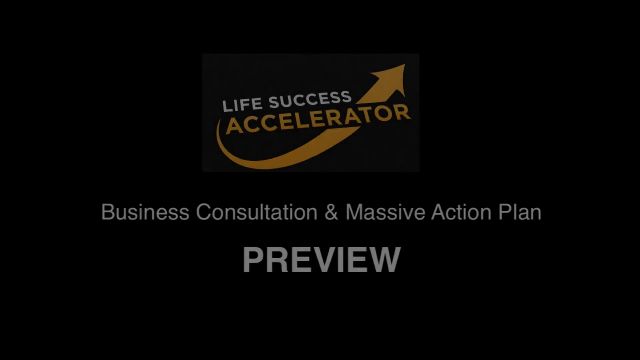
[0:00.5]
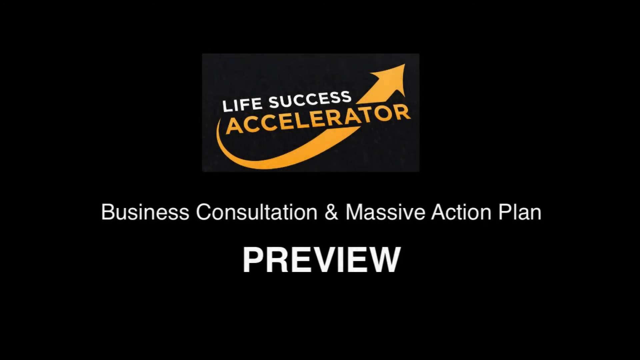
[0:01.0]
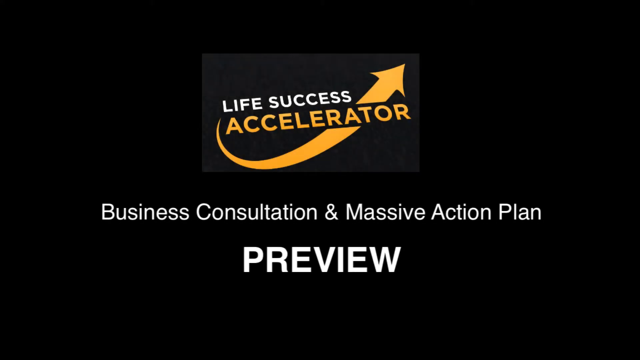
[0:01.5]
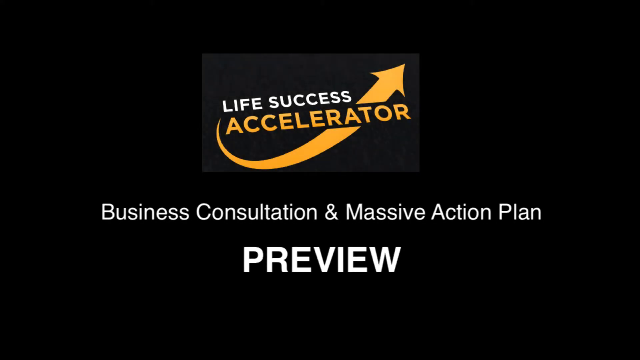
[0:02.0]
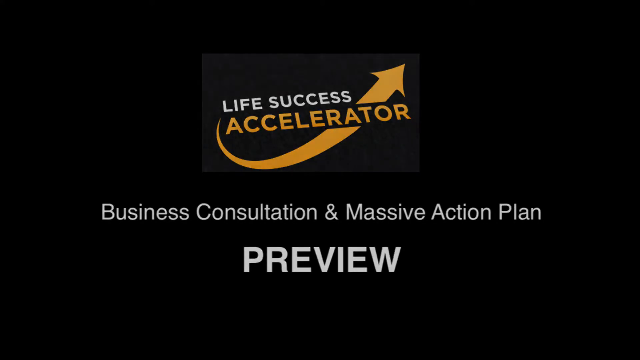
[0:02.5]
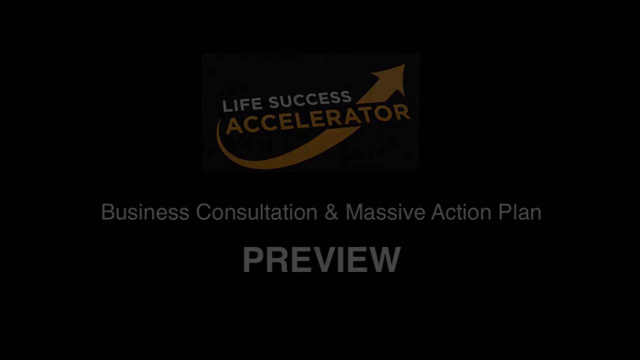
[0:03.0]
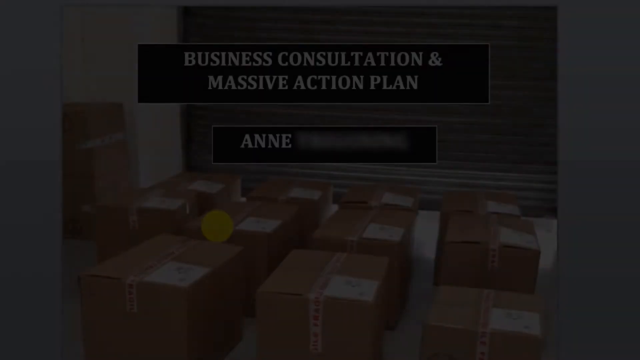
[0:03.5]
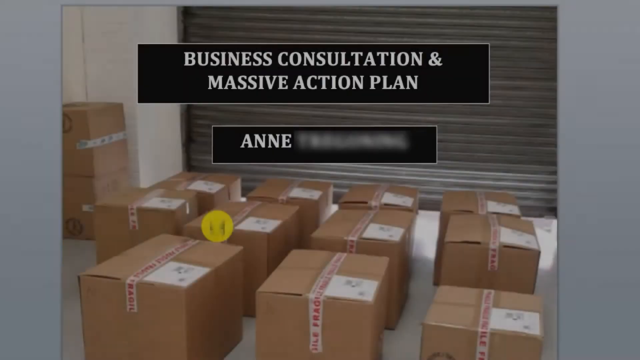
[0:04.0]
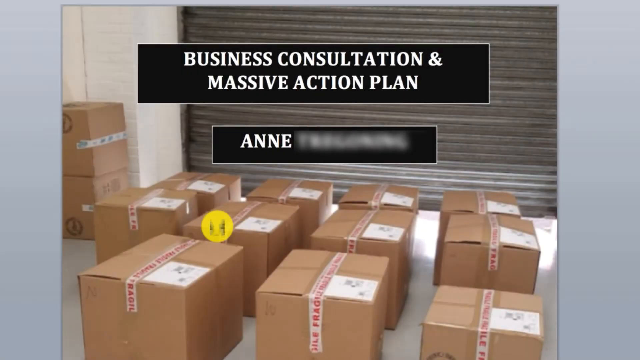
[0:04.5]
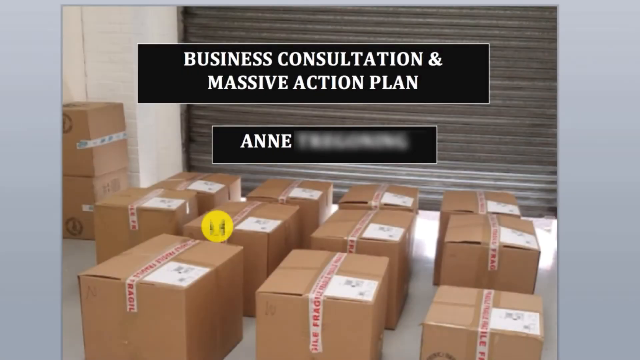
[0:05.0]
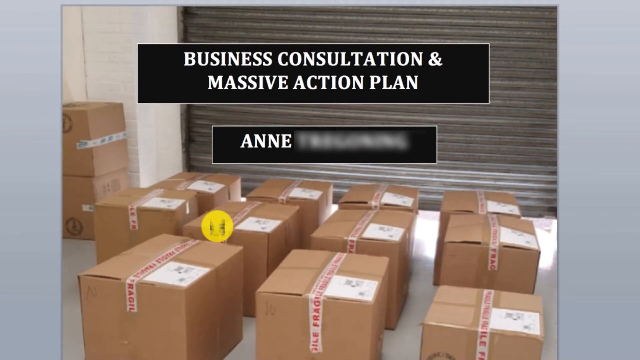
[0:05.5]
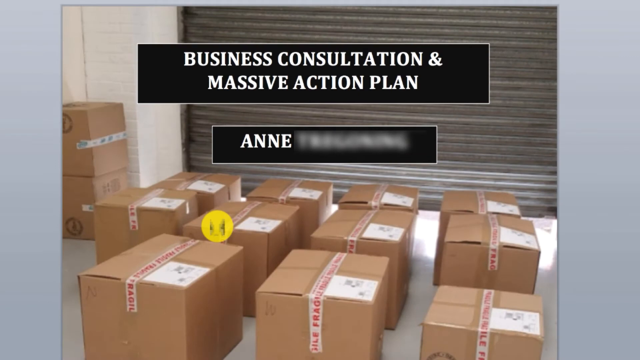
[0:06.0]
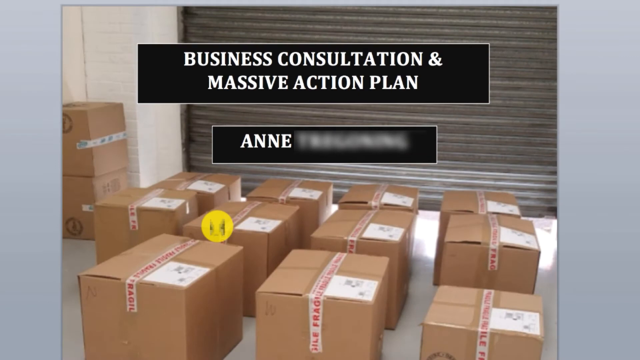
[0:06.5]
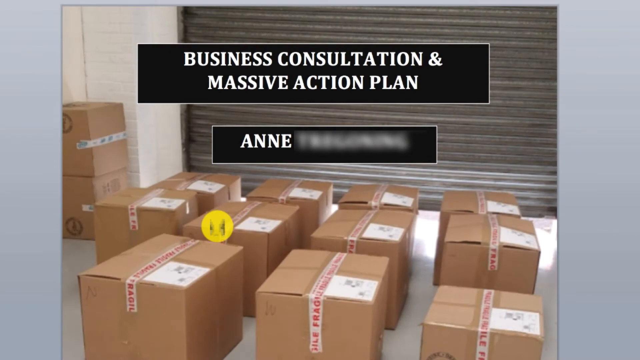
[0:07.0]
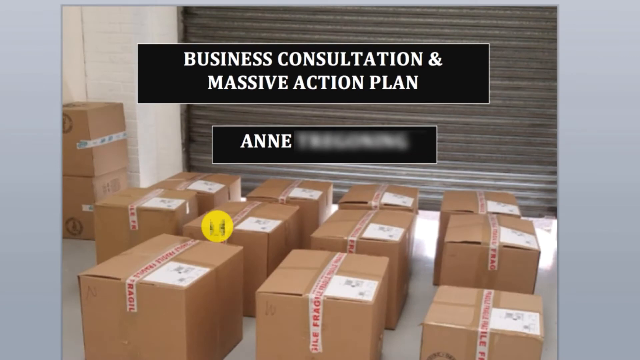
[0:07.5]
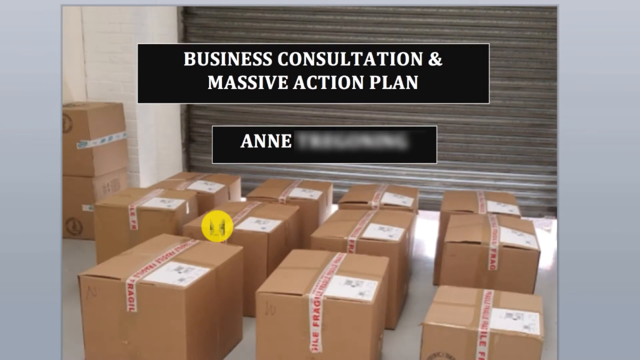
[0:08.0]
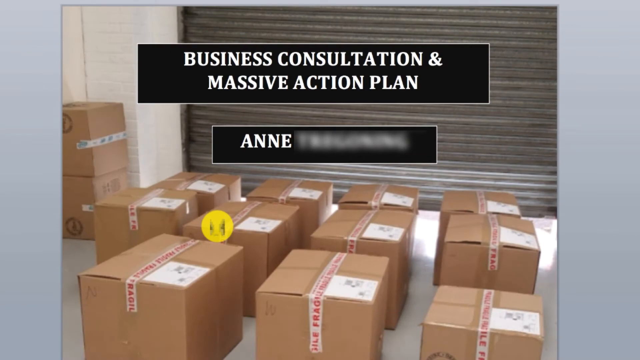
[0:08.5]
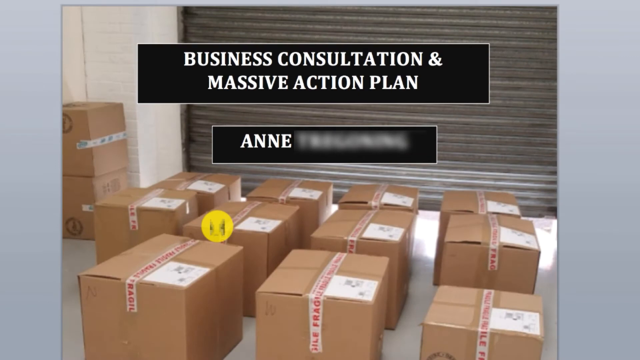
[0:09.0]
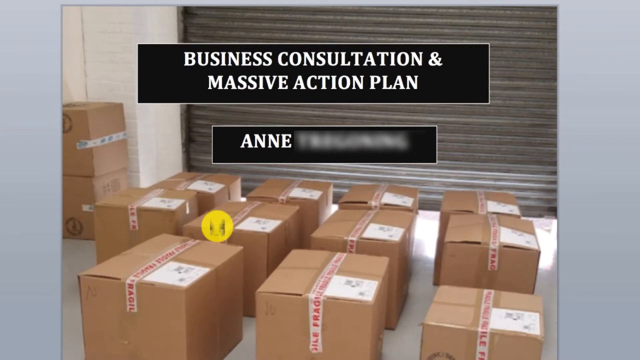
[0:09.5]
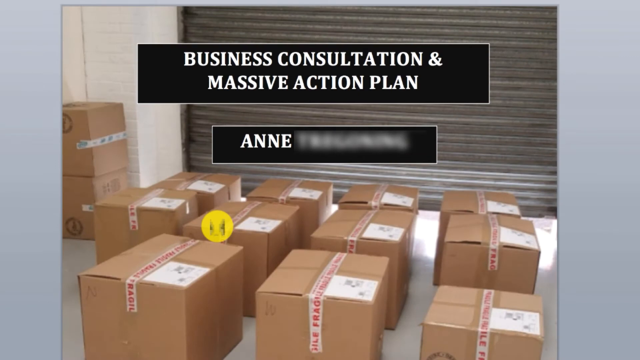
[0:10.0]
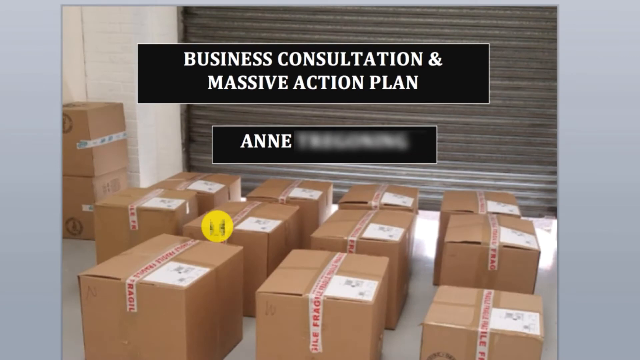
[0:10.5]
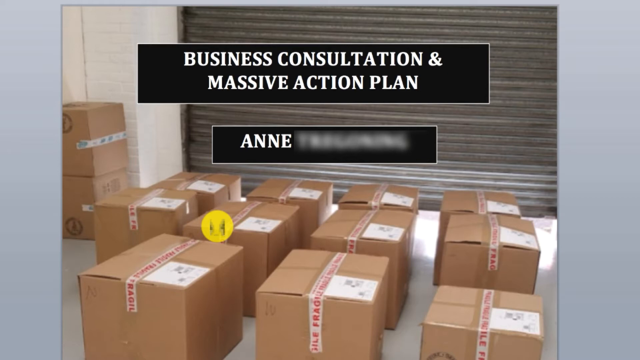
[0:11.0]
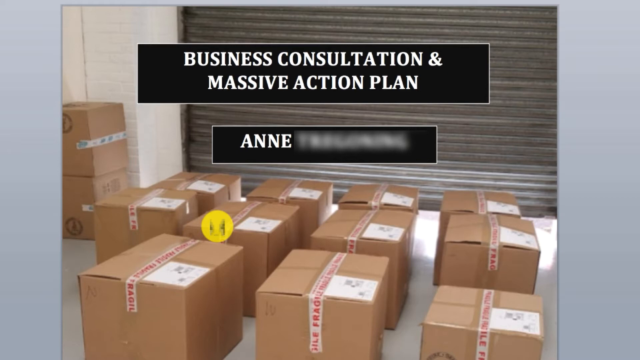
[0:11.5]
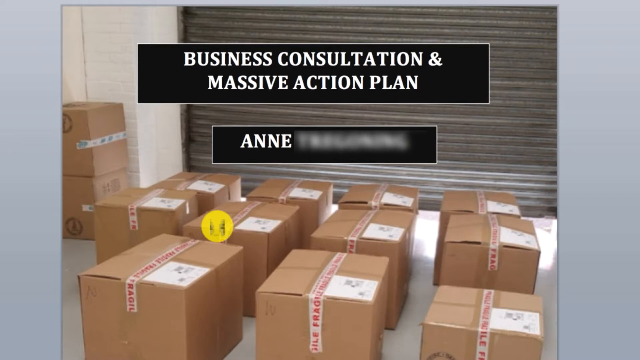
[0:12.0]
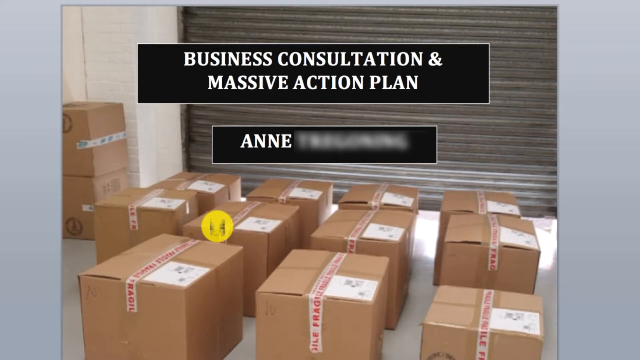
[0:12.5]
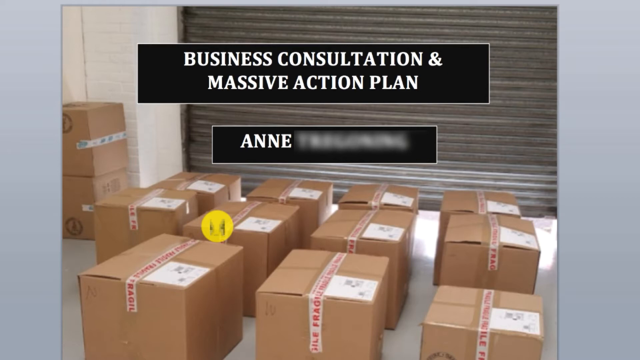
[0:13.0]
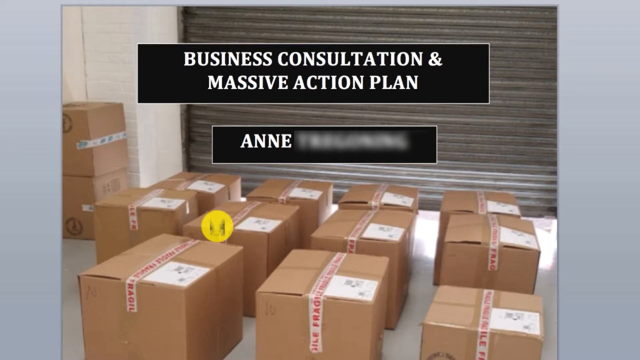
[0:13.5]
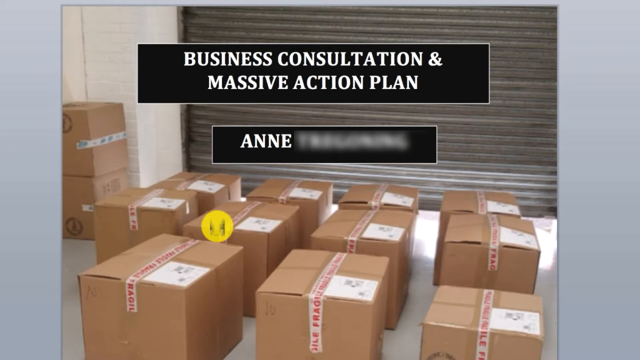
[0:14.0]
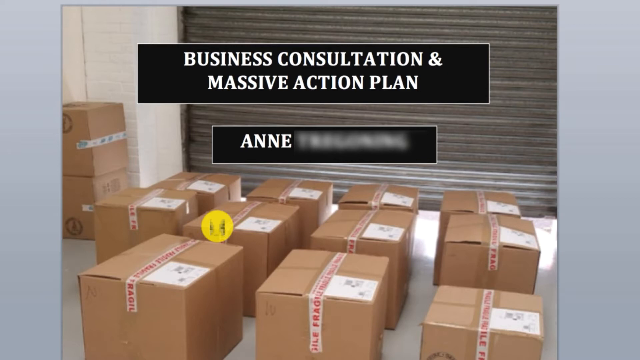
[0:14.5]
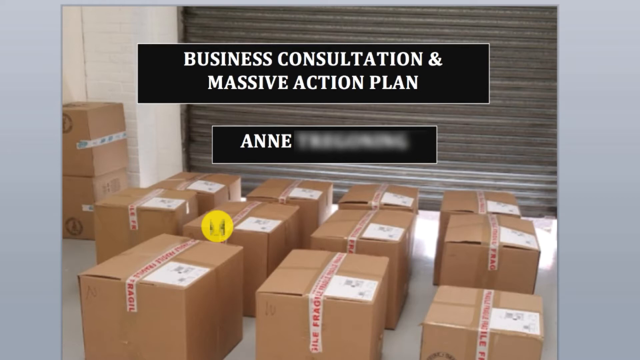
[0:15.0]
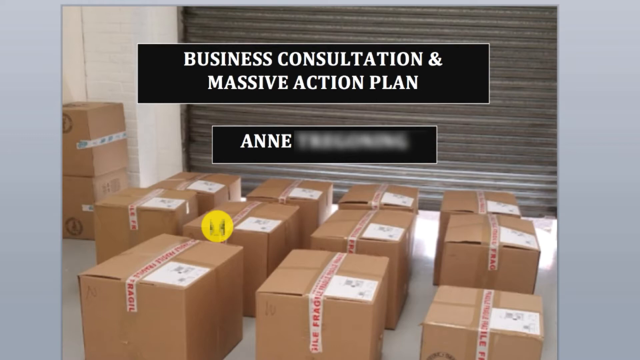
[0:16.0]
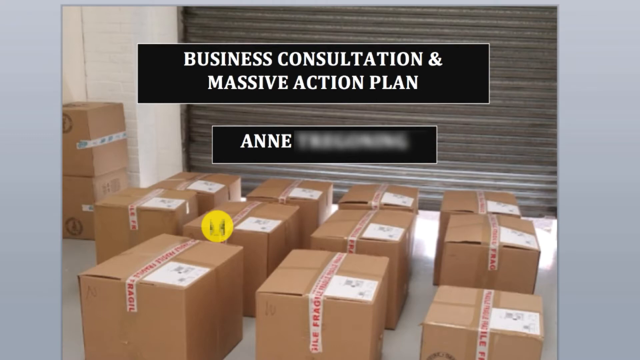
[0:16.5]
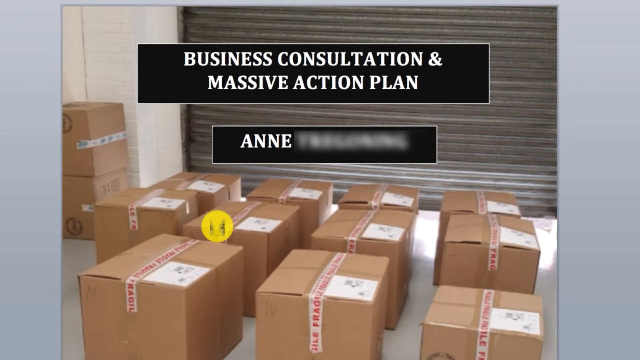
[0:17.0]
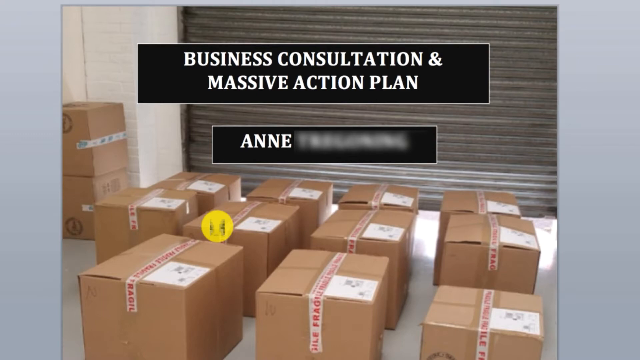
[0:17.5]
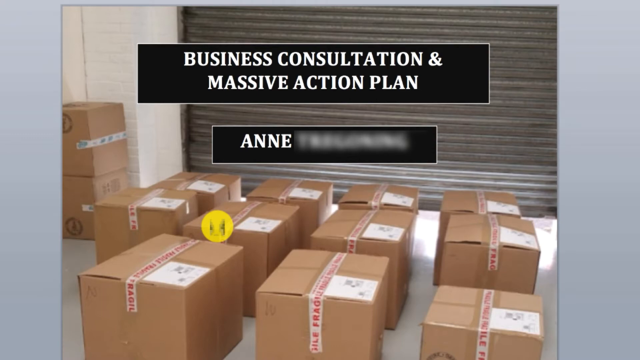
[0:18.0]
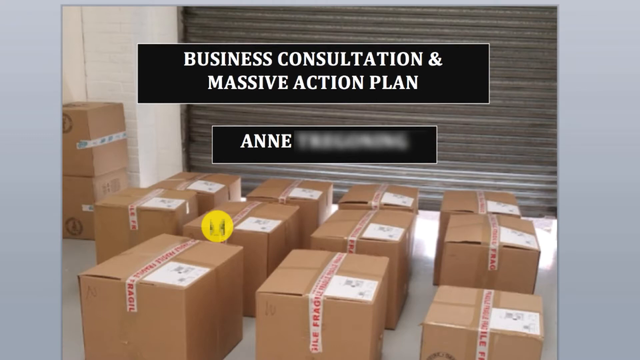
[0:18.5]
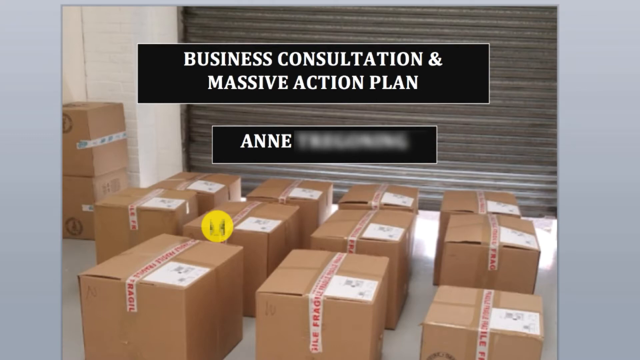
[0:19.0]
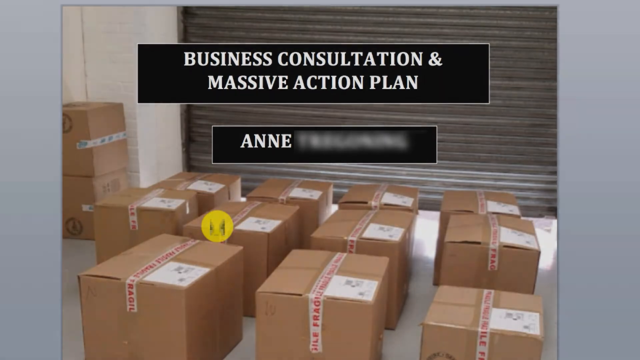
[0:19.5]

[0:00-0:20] The video opens on a black background with a logo in the middle that says "life success accelerator." Within the logo, something kind of moves in an arc shape from the middle to the upper right, with an arrow pointing. Then text in all caps says "business consultation and massive action plan preview." This dissolves into another image that says "business consultation and massive action plan," and below that, in a box, it says "Ann" followed by a redacted last name. The background appears to be potentially a warehouse, with a garage door and a bunch of boxes on the floor. The slide stays up for quite a few seconds and then fades to black.